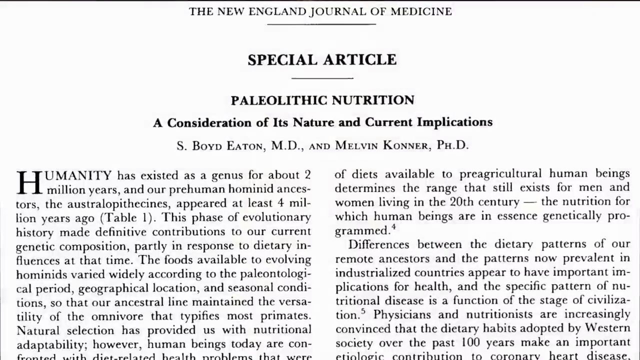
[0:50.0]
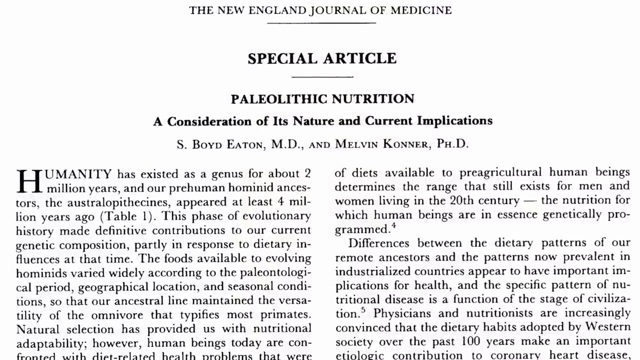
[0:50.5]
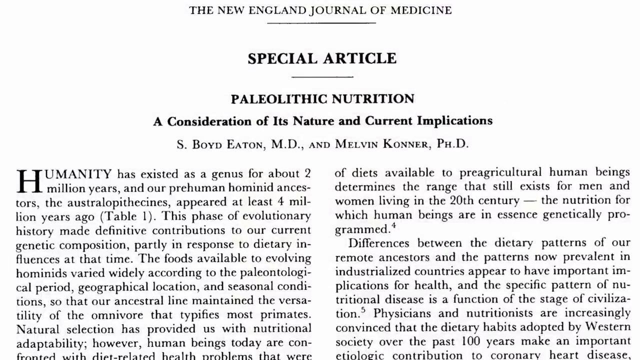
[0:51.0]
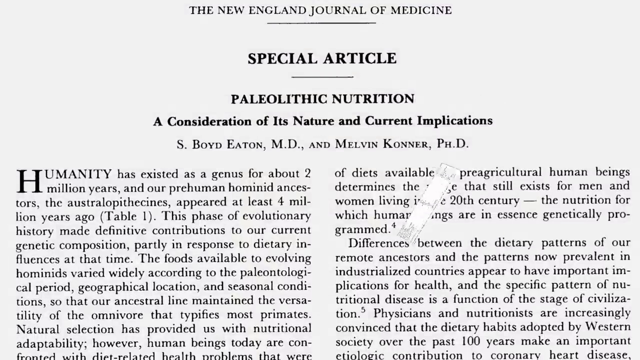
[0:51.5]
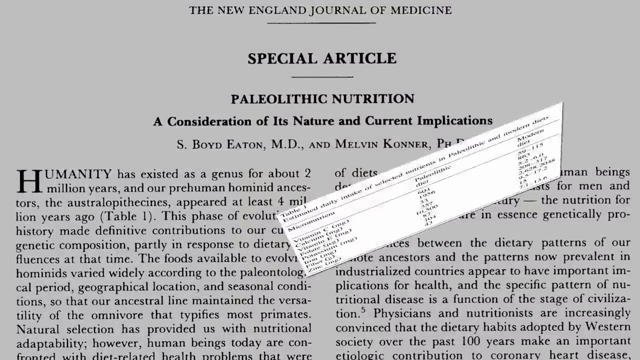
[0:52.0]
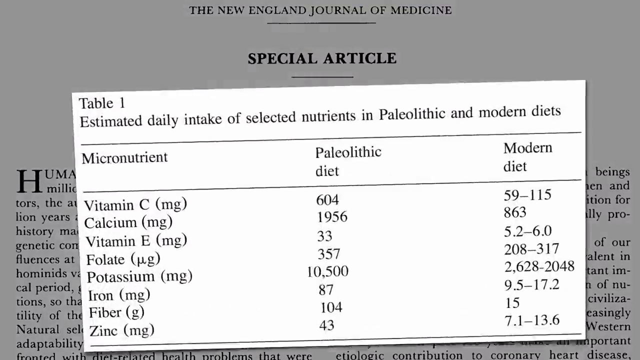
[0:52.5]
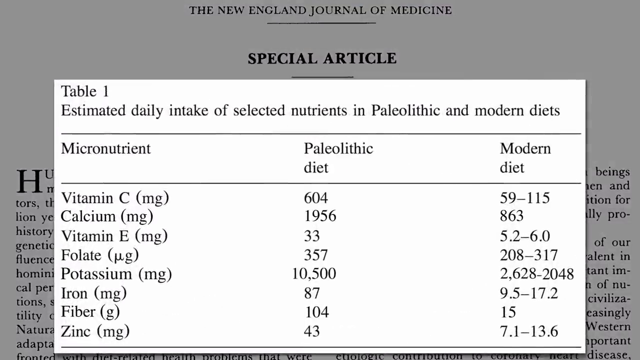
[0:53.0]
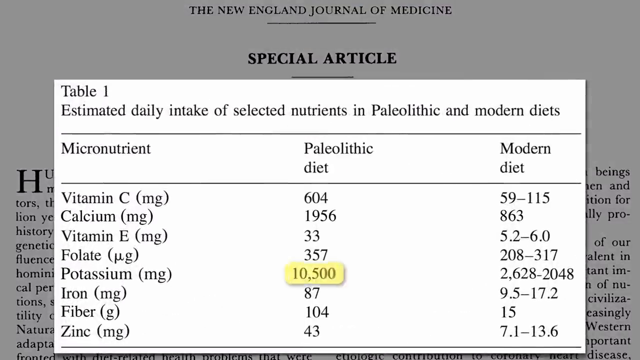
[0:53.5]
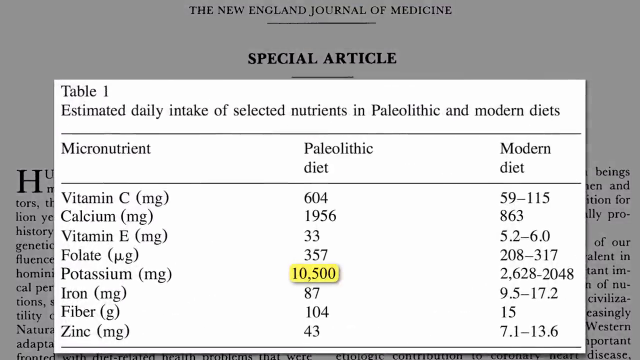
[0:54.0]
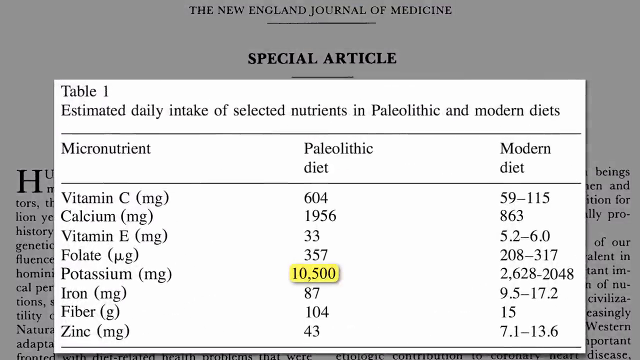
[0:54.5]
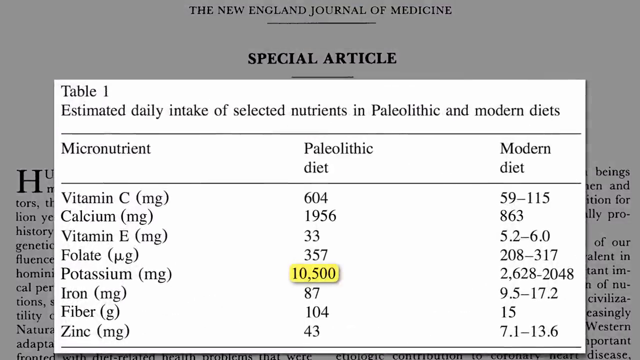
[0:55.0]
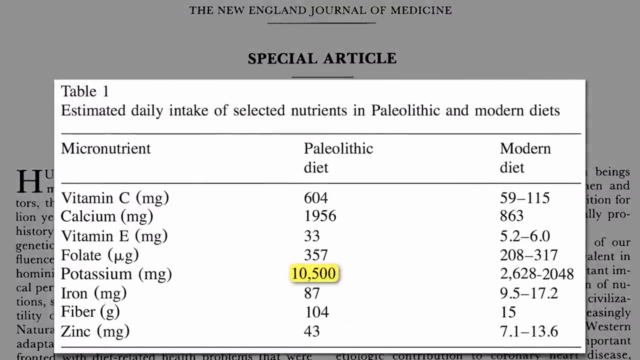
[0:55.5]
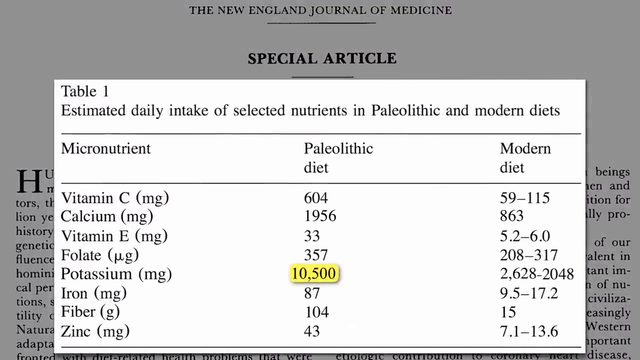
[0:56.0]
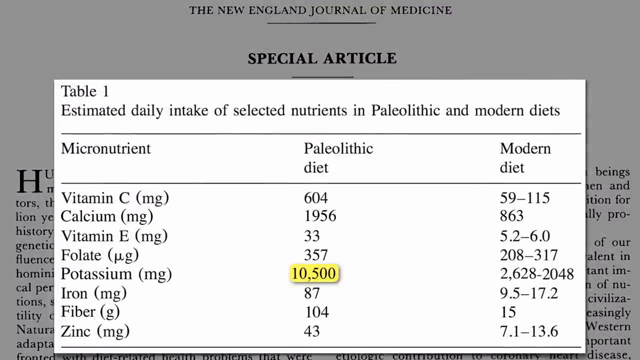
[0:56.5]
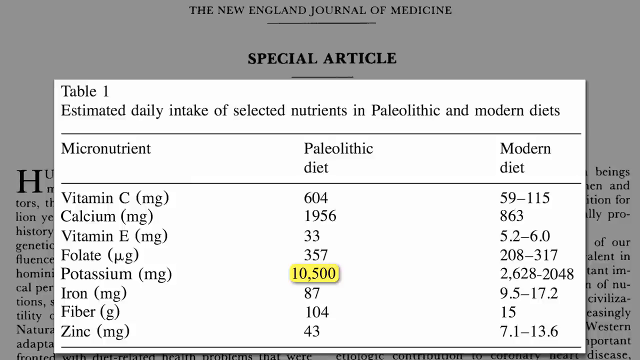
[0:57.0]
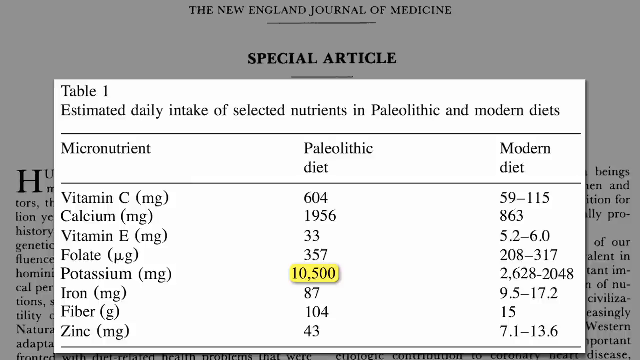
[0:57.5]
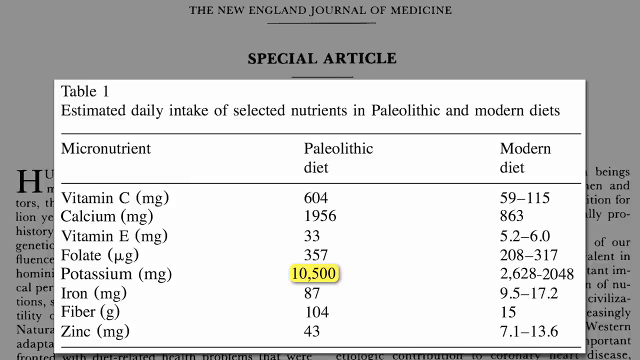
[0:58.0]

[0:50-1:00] The special article by S. Boyd Eaton, MD, and Melvin Connor, PhD, from The New England Journal of Medicine is on screen. At the top it reads "Paleolithic nutrition, a consideration of its nature and current implications." The article concerns the difference between the dietary patterns of our ancestors and those of today. The video extracts a portion of the article: a table of estimated daily intake of selected nutrients in Paleolithic and modern diets. The one item pointed out is potassium, listed for the Paleolithic diet at 10,500 milligrams daily and highlighted in yellow. Other nutrients on the chart that are not highlighted are vitamin C 604 mg, calcium 1956 mg, vitamin E 33 mg, folate 357 mg, iron 87 mg, fiber 104 mg, and zinc 43 mg.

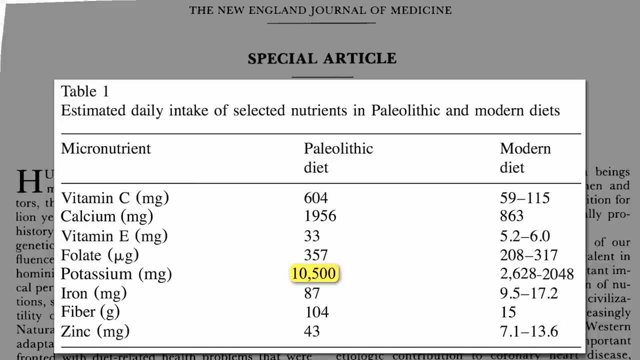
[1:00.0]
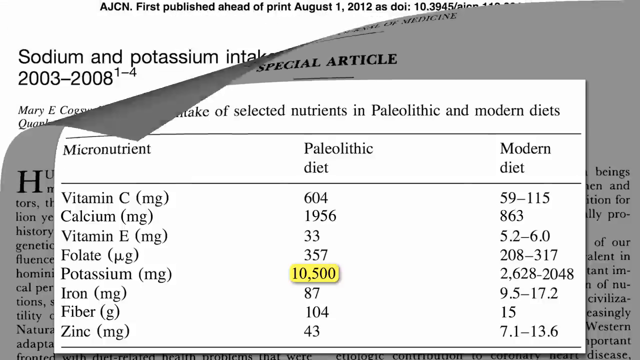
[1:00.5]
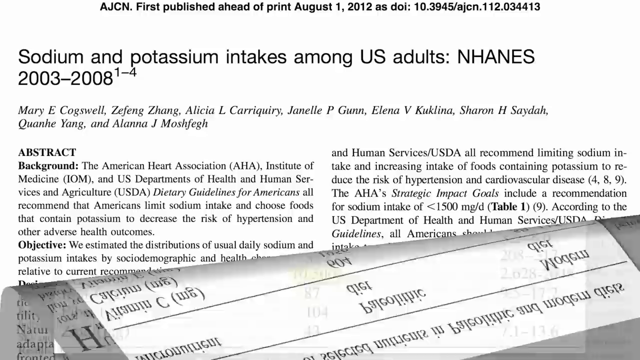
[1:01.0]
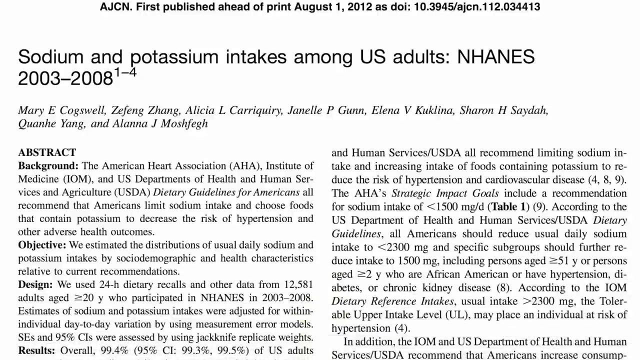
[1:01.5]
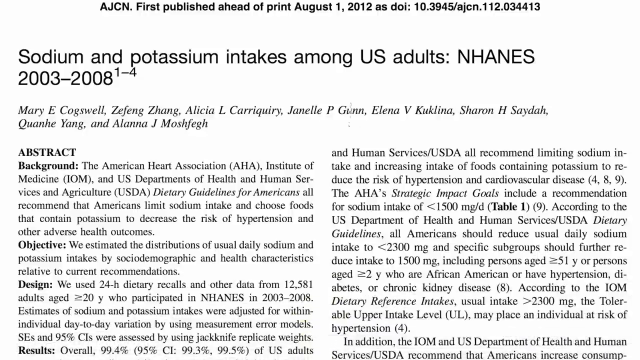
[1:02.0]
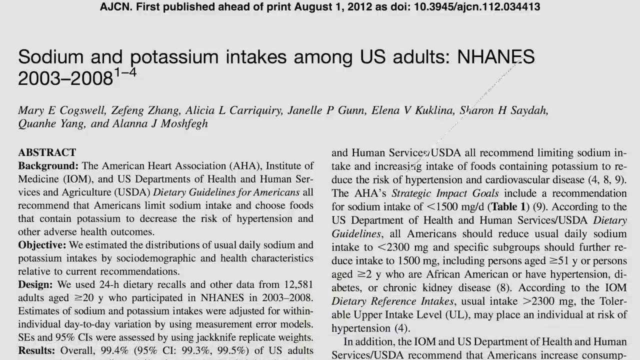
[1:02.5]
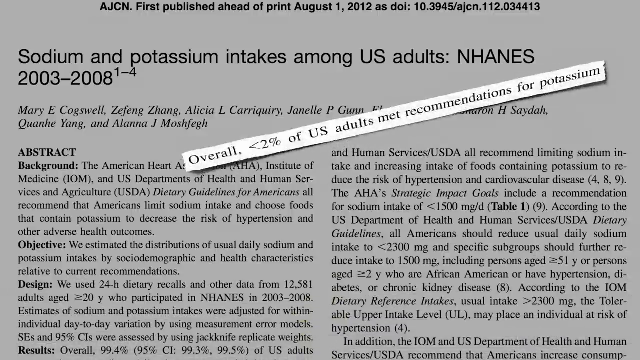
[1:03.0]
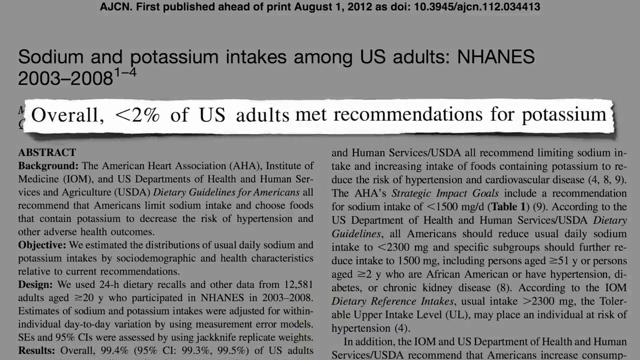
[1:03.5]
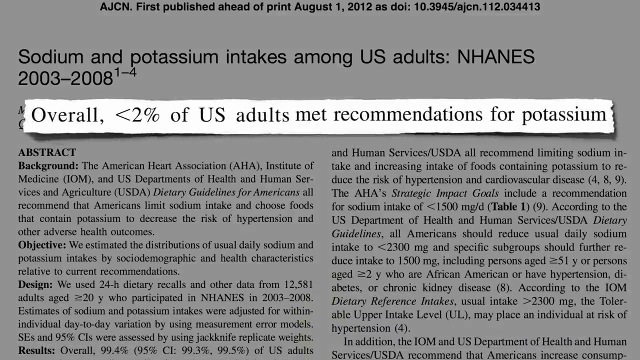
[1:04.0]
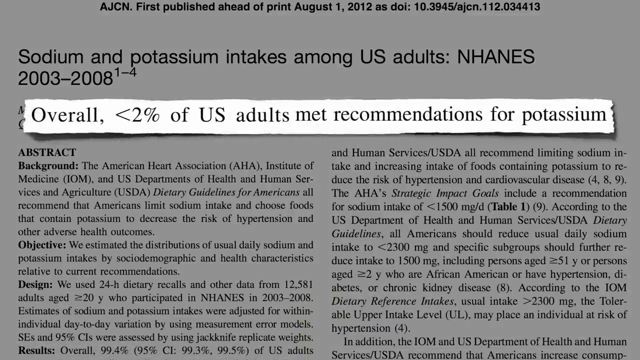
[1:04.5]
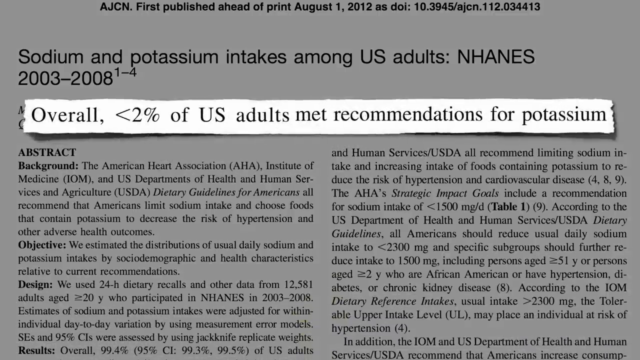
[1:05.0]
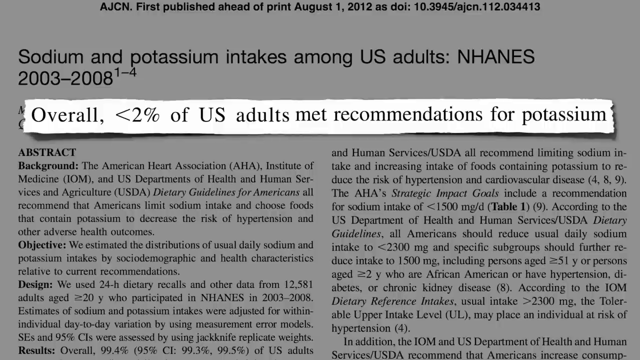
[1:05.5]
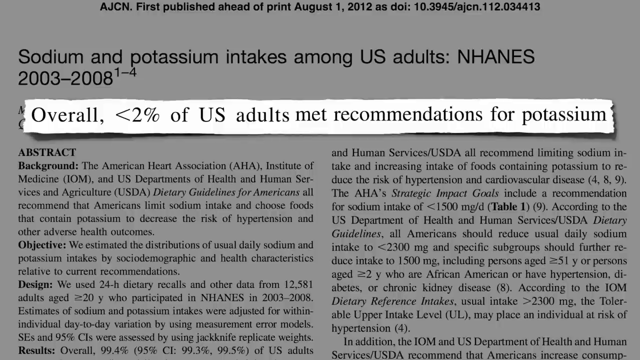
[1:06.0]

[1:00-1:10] The video goes to another article headed "sodium and potassium intakes among U.S. adults NHANES 2003 to 2008." It has a list of contributors, and the background section says the American Heart Association, Institute of Medicine, and U.S. Department of Health and Human Services and Agriculture Dietary Guidelines for Americans all recommend that Americans limit sodium intake and choose foods that contain potassium to decrease the risk of hypertension and other adverse health outcomes. The objective states that they estimated the distributions of usual daily sodium and potassium intakes relative to current recommendations. The part of the article taken and highlighted on the screen says, "overall, less than 2 percent of US adults met recommendations for potassium."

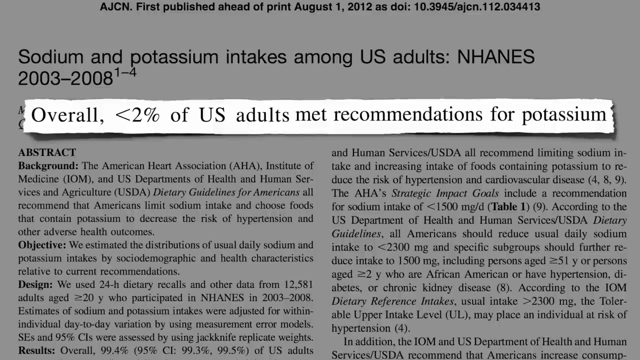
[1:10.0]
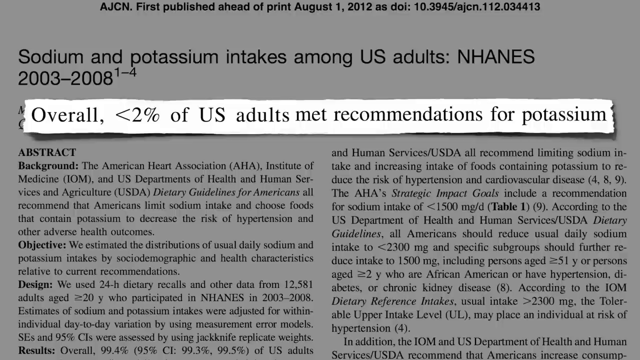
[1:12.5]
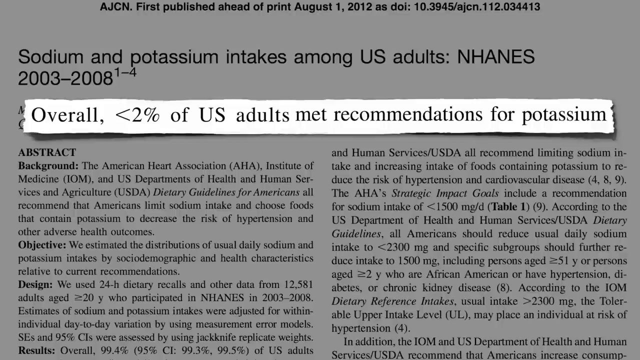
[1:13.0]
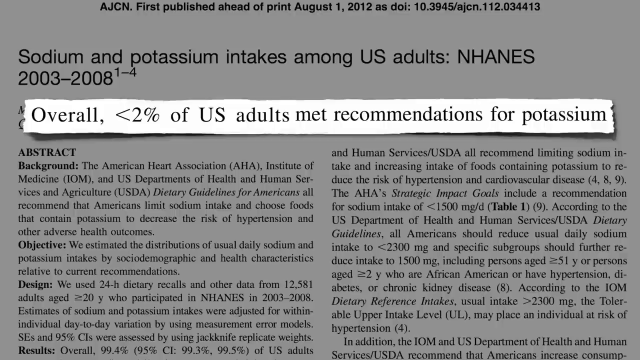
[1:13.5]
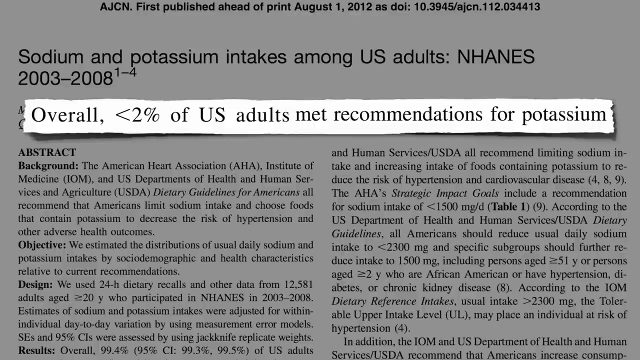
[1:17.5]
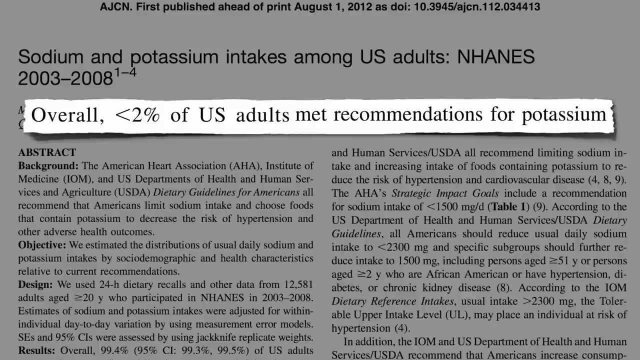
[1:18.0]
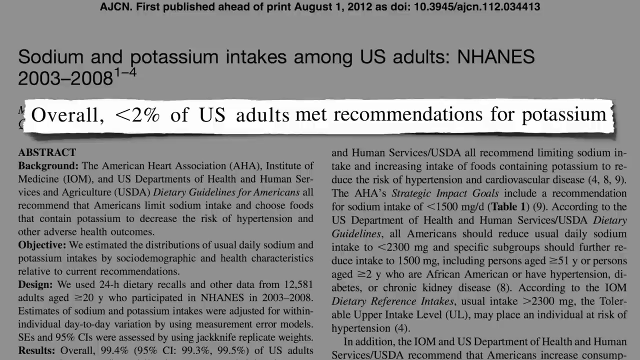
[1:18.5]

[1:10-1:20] The article on sodium and potassium intakes among U.S. adults, NHANES 2003-2008, remains on screen with the highlighted line that overall, less than 2% of U.S. adults met recommendations for potassium. The article states that Americans need less than 2300 mg of sodium daily. At the top, the article indicates it was first published on August 1st, 2012.